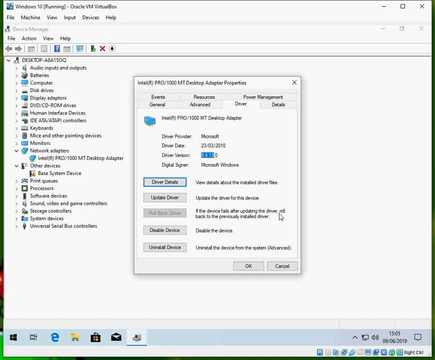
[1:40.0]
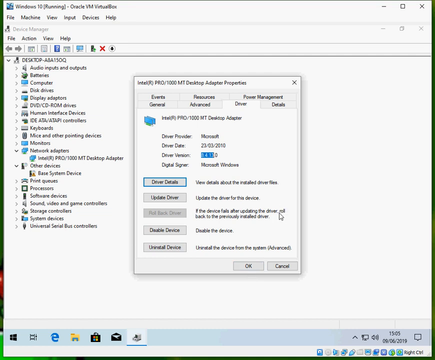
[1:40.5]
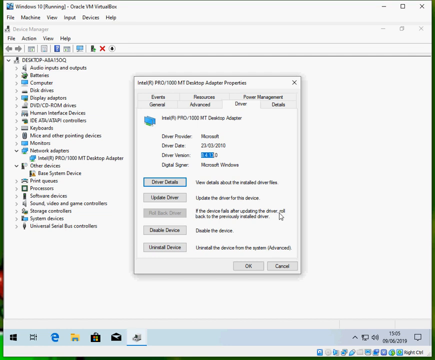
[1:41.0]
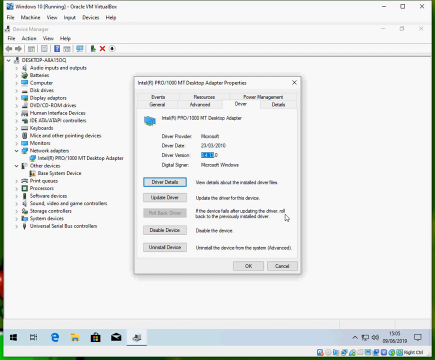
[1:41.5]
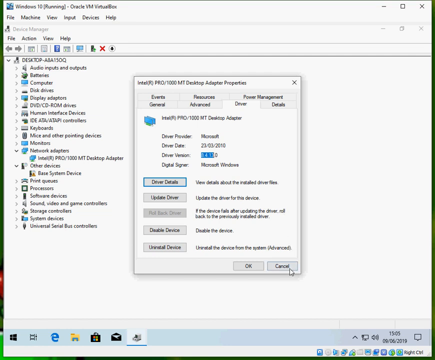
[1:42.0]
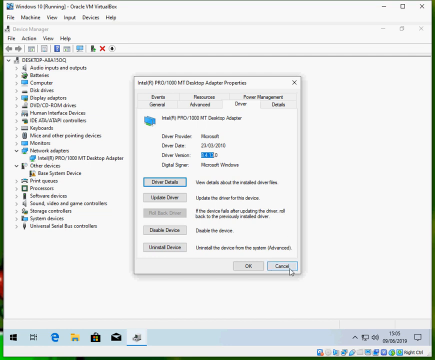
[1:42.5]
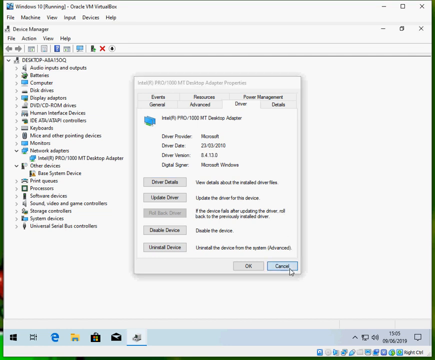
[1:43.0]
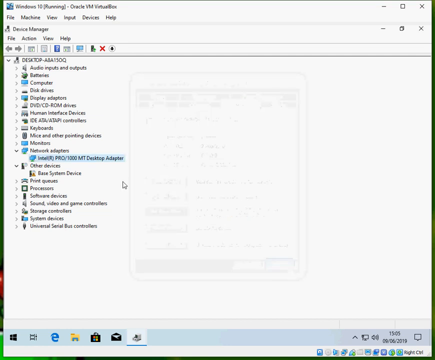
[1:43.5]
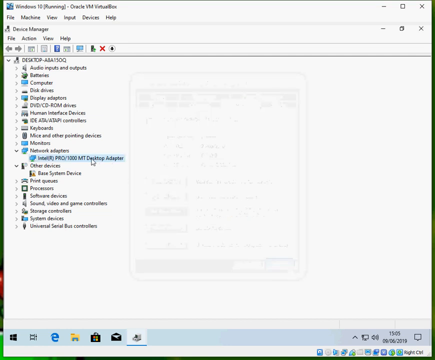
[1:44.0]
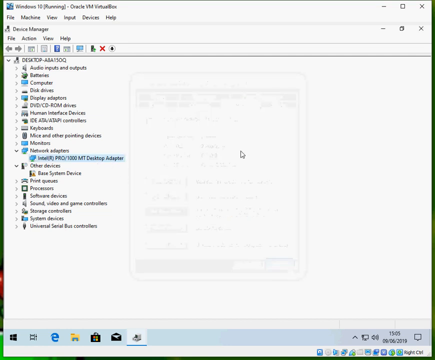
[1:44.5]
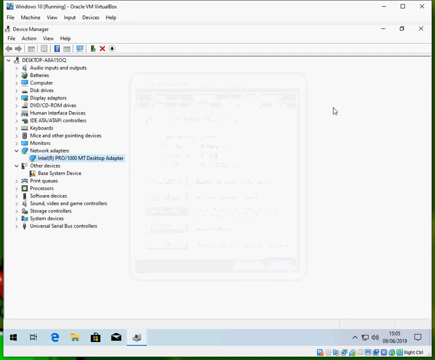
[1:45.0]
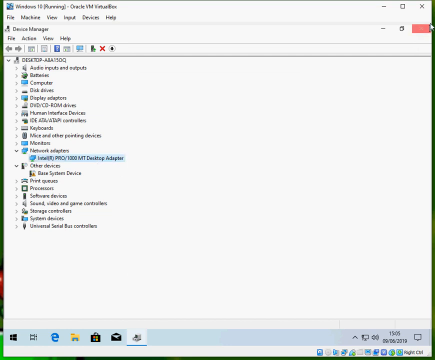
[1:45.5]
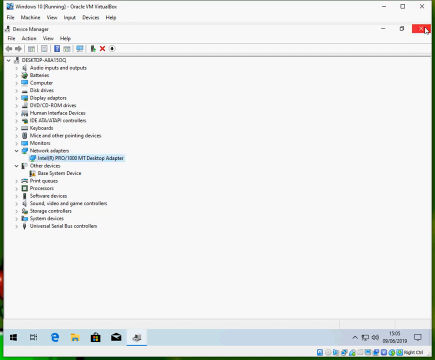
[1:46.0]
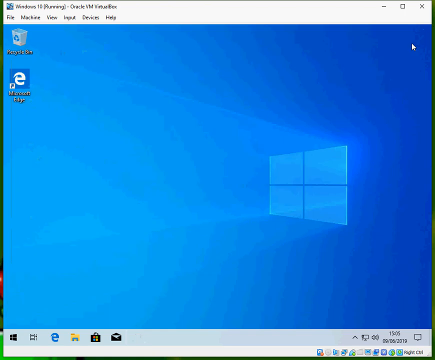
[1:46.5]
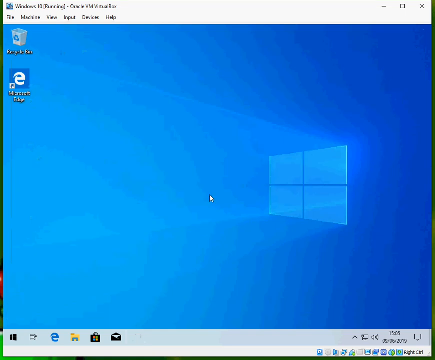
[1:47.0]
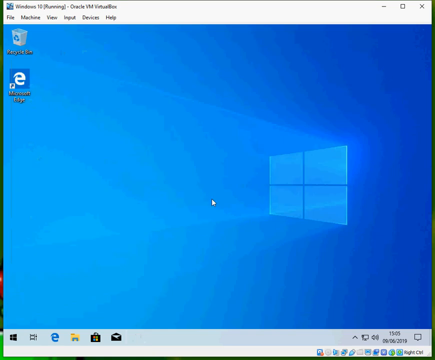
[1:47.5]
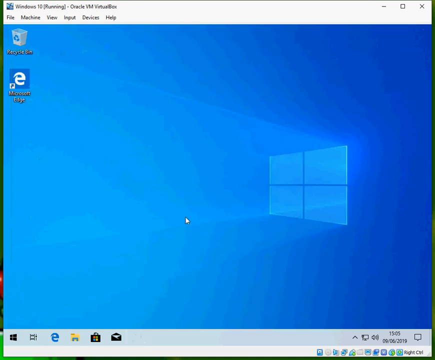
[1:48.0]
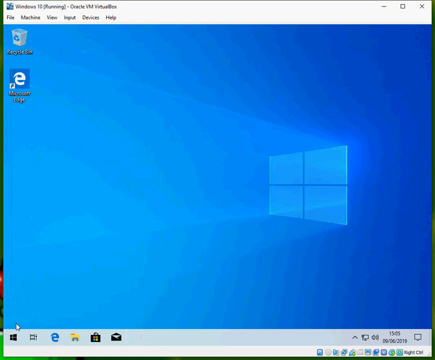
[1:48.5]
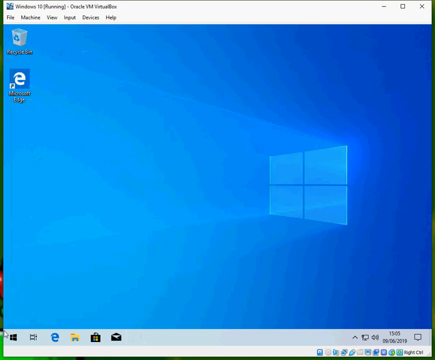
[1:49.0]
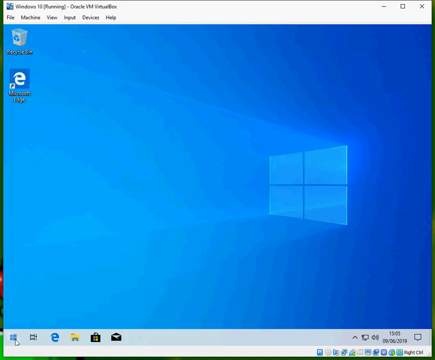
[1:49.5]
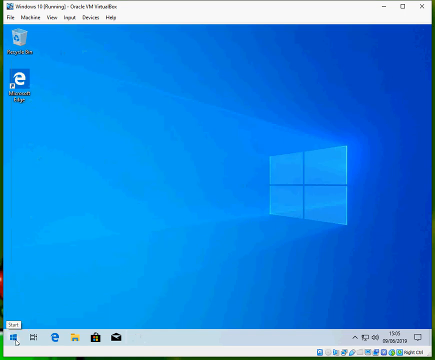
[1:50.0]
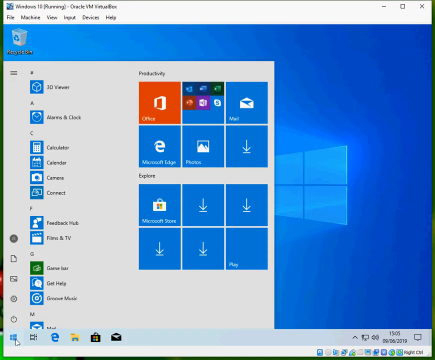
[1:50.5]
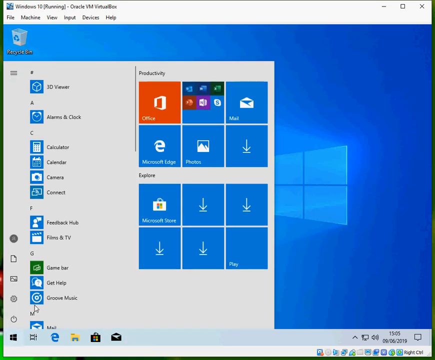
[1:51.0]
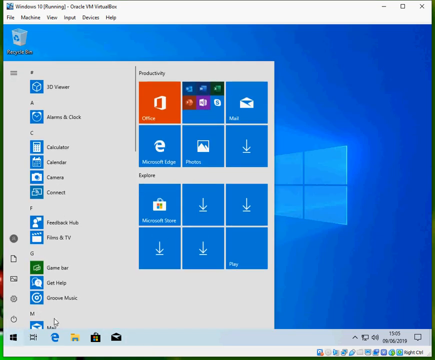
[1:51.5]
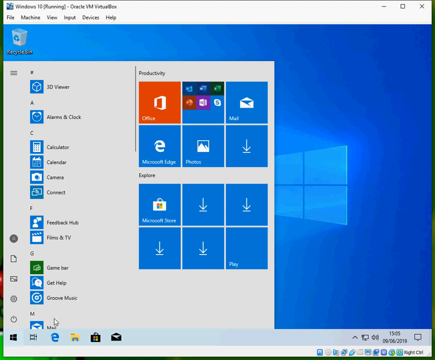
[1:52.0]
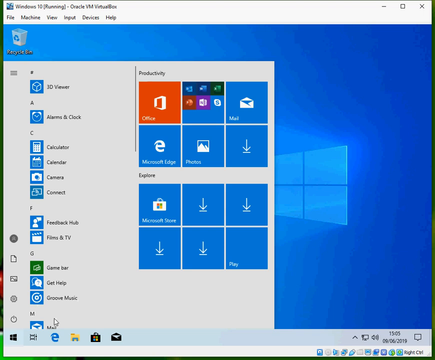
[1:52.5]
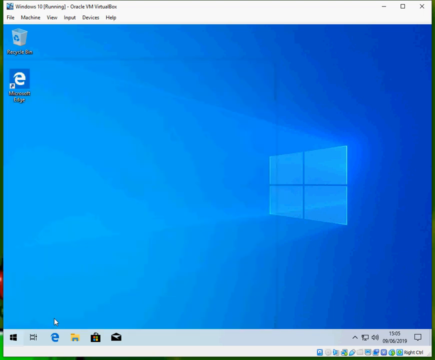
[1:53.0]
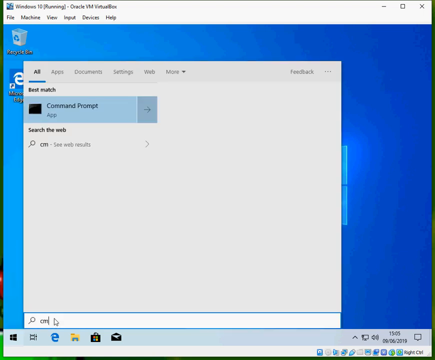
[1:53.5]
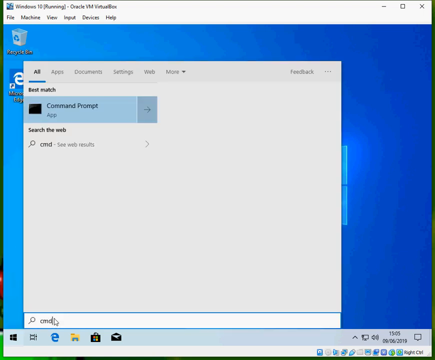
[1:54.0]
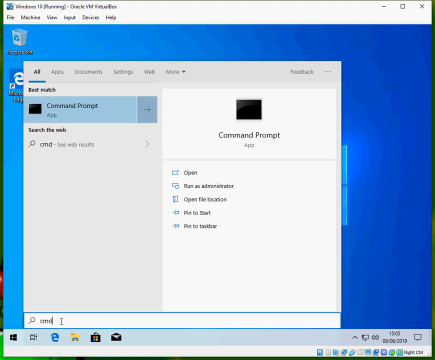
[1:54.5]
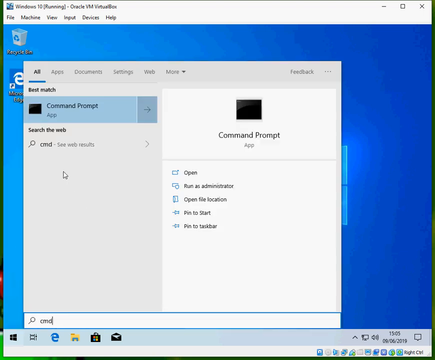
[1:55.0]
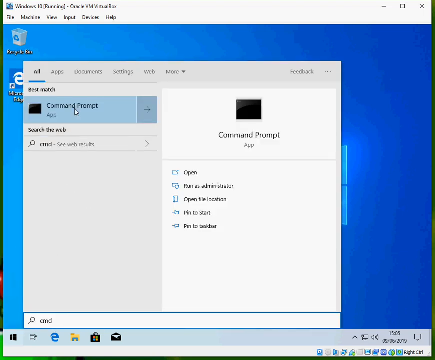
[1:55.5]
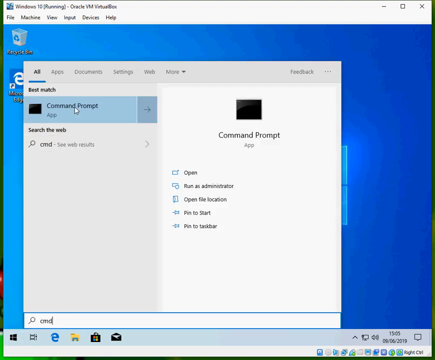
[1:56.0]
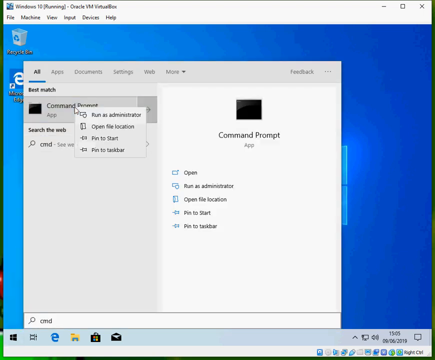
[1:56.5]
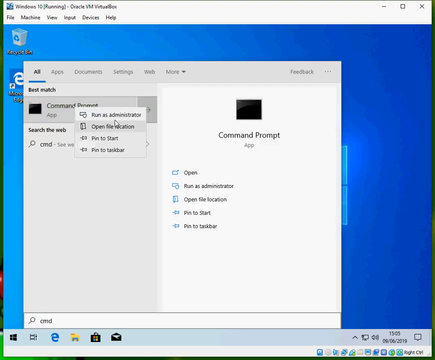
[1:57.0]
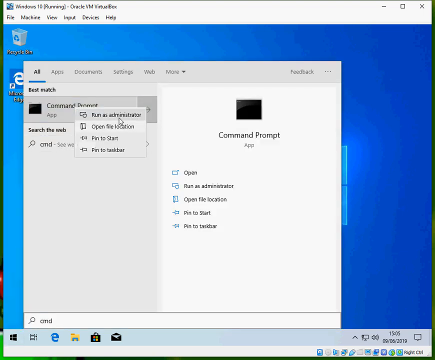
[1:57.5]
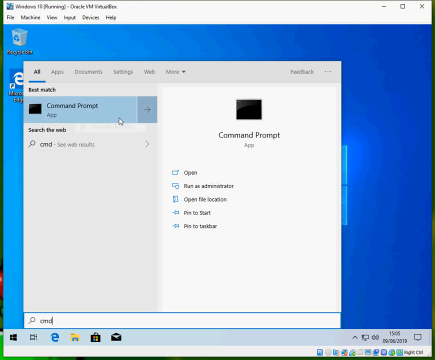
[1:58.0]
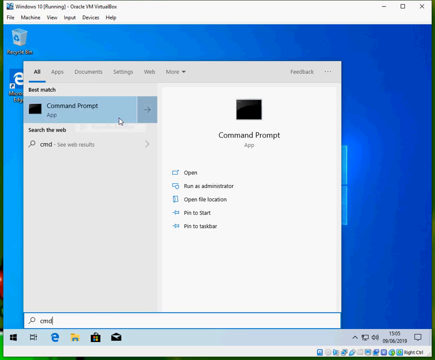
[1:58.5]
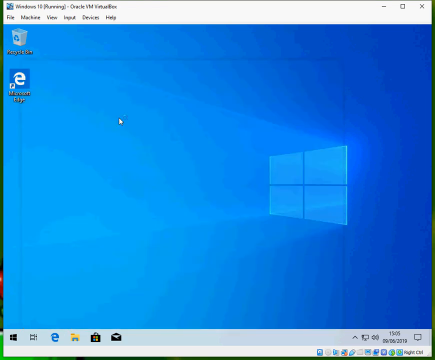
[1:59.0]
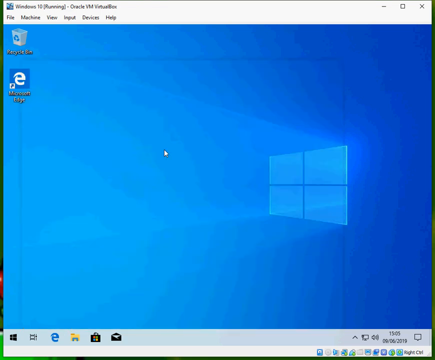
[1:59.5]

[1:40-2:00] A programs page is shown on a Windows PC, with multiple programs listed on the left with drop-down arrows. The person returns to the blue Windows logo page with the light shining through the window. They then click and bring up a box with multiple tabs: six on top for productivity and six on the bottom for explore. Icons are listed vertically by letters on the left. The productivity tabs include Office, Mail, Microsoft Edge, Downloads and Photos; the explore tabs include Microsoft Store, Play and four more with download arrows. The person brings up the command prompt app, moving the cursor around the page, clicks on command prompt, and hovers the cursor over run as an administrator. That brings up a Desktop Adapter Properties box.